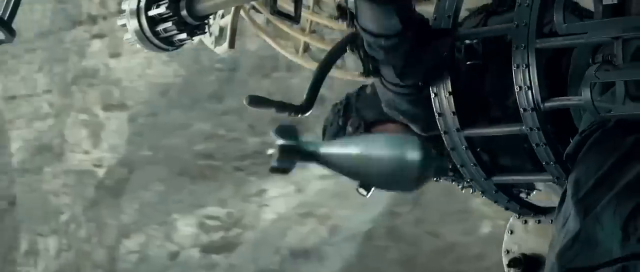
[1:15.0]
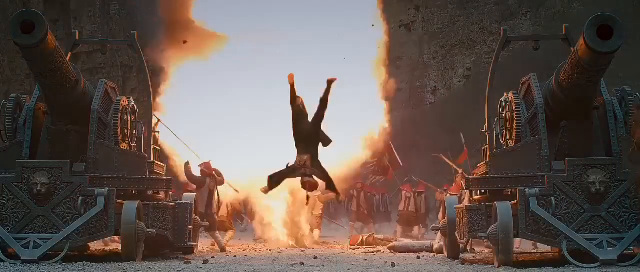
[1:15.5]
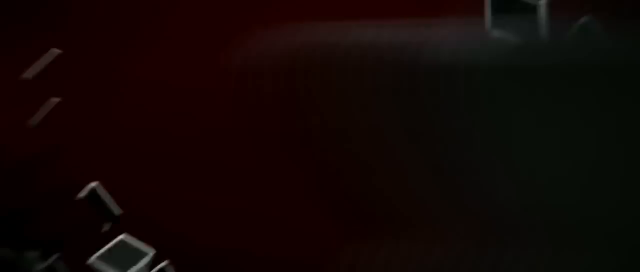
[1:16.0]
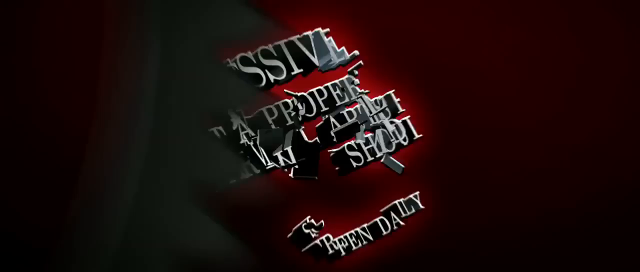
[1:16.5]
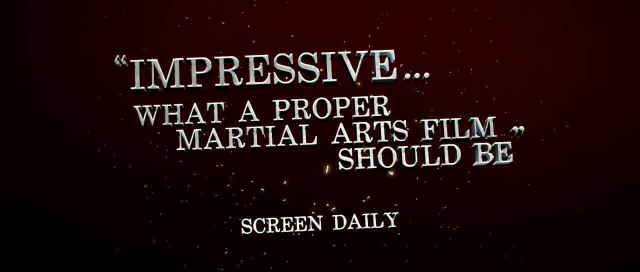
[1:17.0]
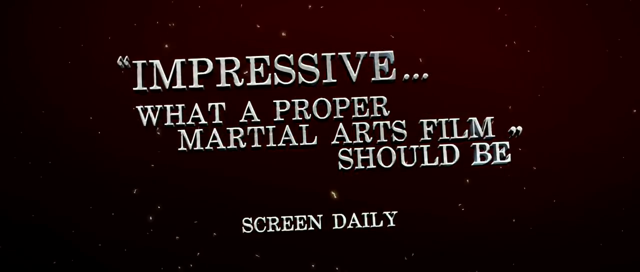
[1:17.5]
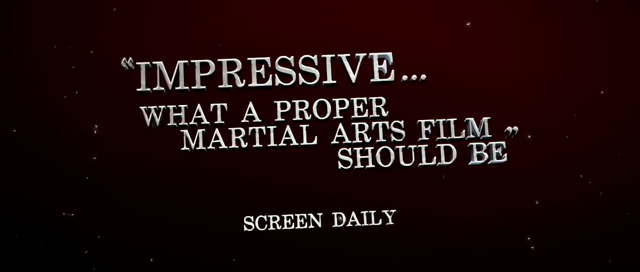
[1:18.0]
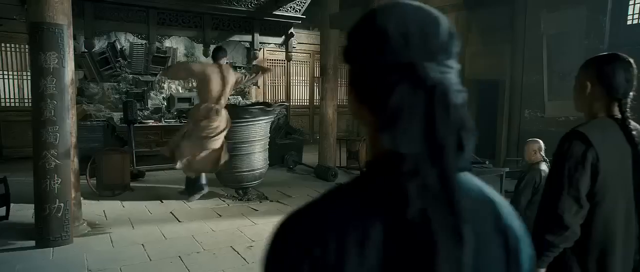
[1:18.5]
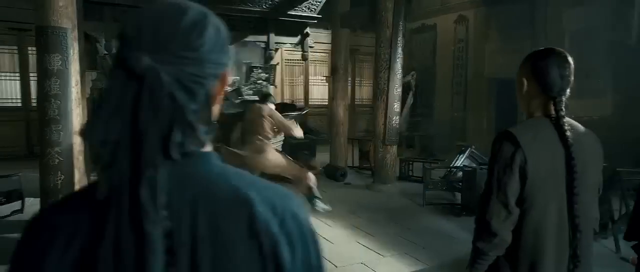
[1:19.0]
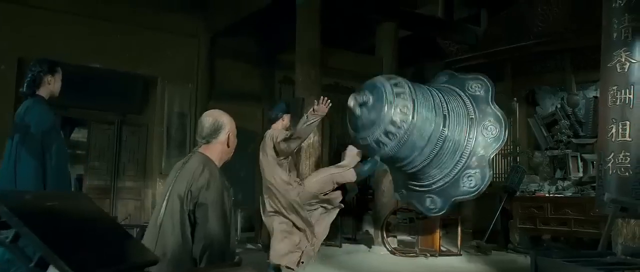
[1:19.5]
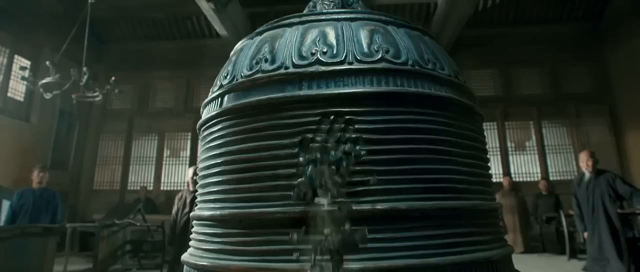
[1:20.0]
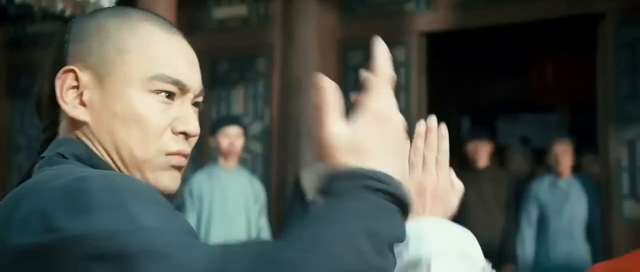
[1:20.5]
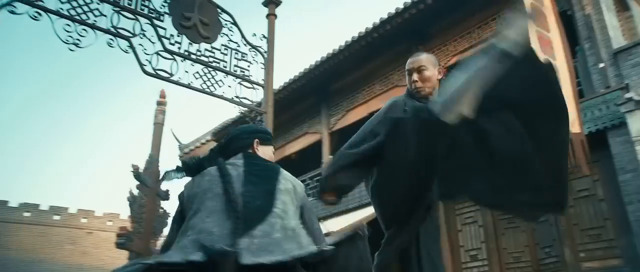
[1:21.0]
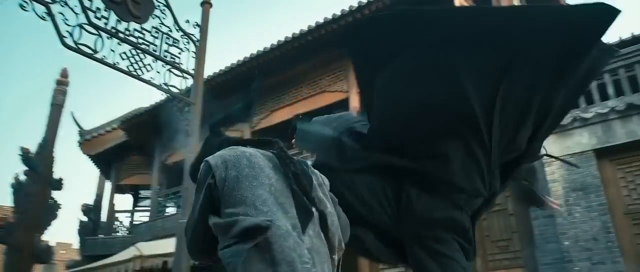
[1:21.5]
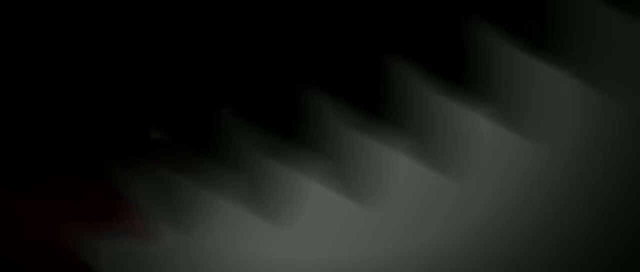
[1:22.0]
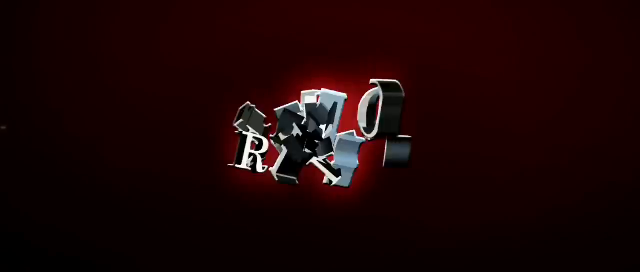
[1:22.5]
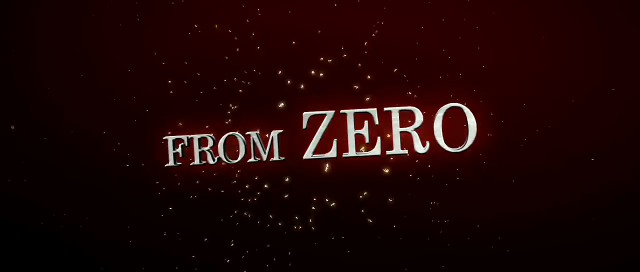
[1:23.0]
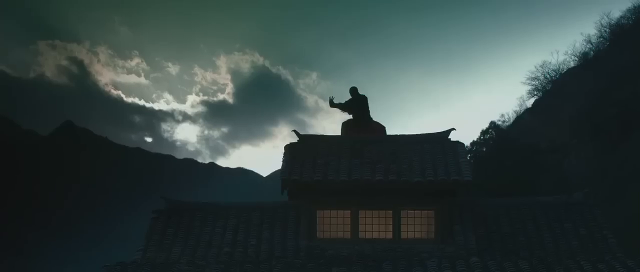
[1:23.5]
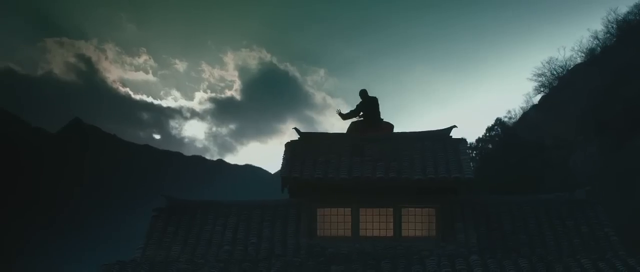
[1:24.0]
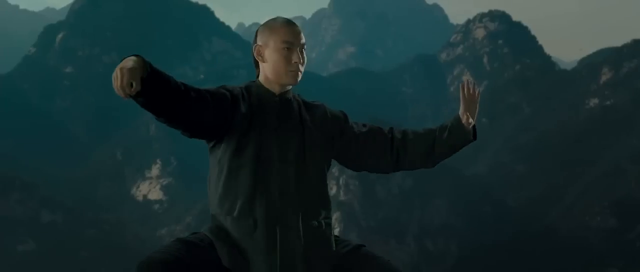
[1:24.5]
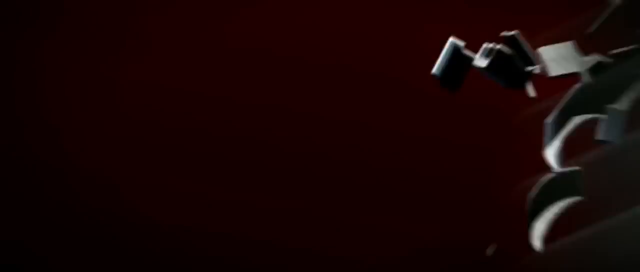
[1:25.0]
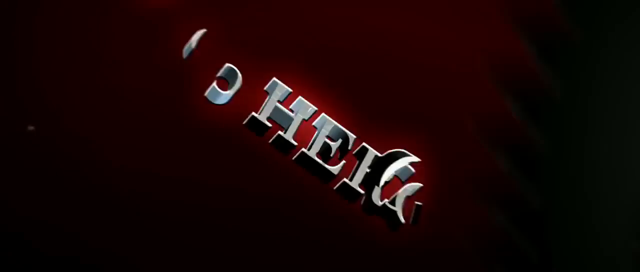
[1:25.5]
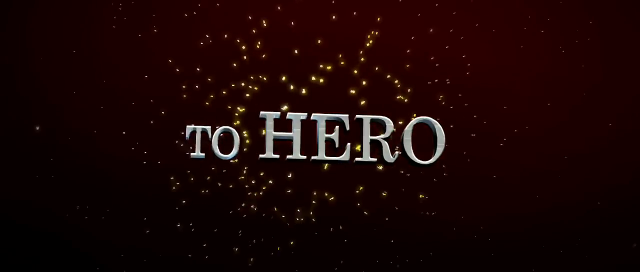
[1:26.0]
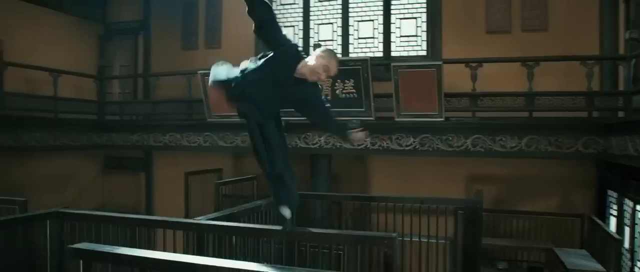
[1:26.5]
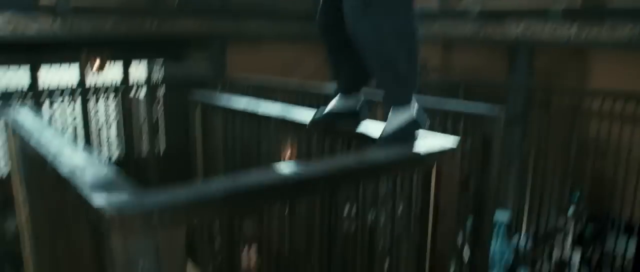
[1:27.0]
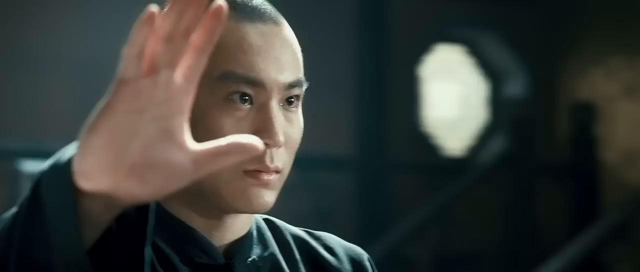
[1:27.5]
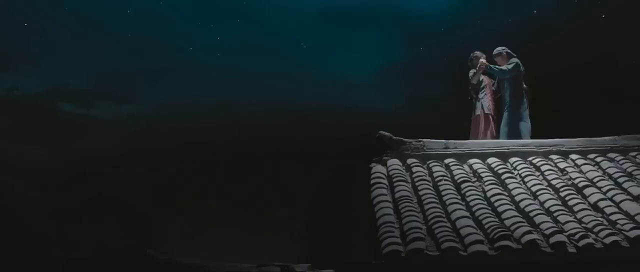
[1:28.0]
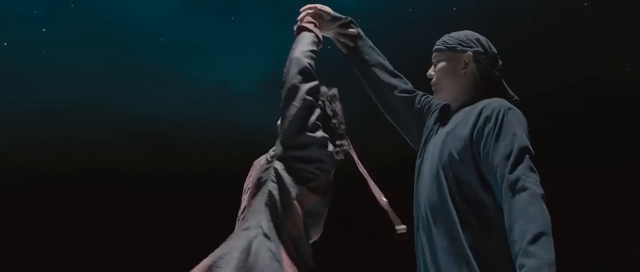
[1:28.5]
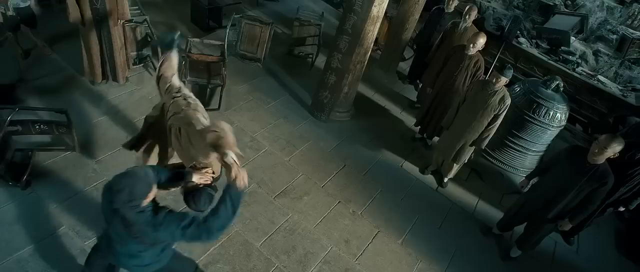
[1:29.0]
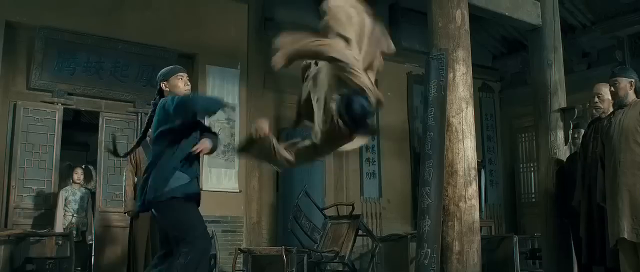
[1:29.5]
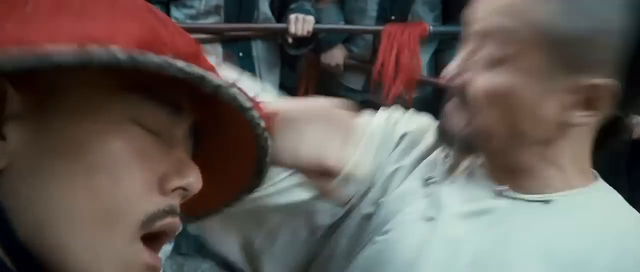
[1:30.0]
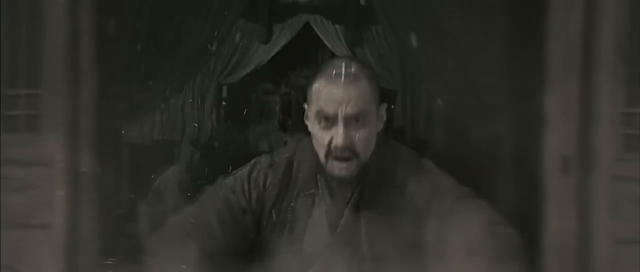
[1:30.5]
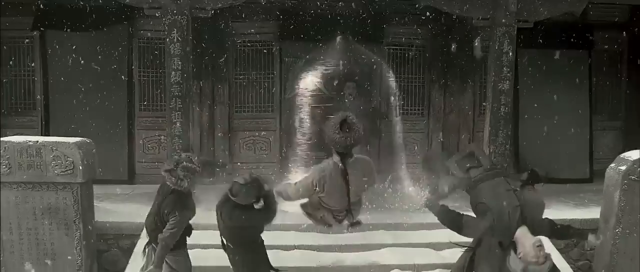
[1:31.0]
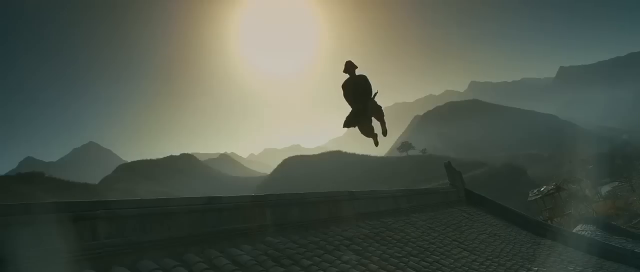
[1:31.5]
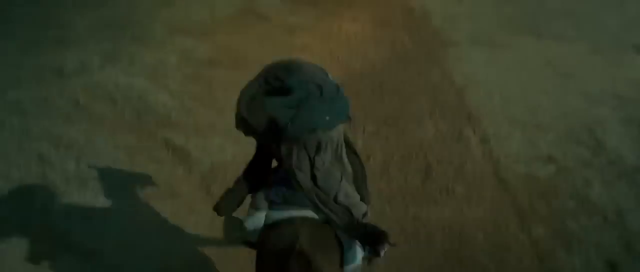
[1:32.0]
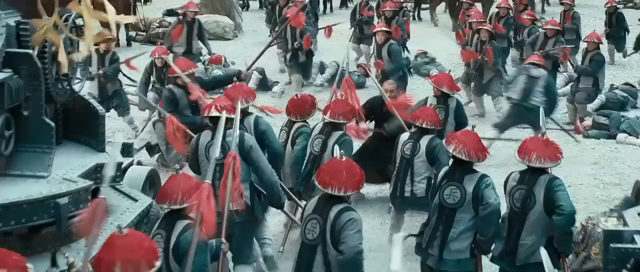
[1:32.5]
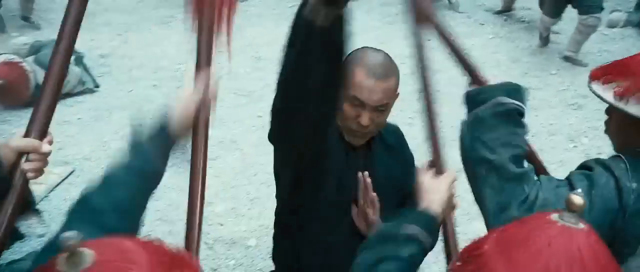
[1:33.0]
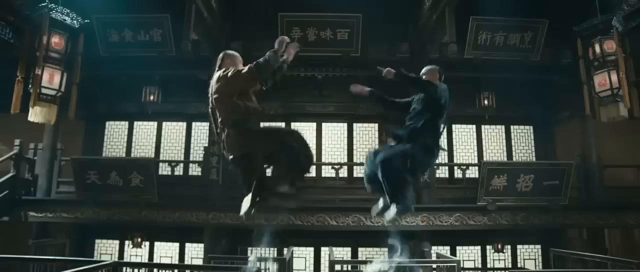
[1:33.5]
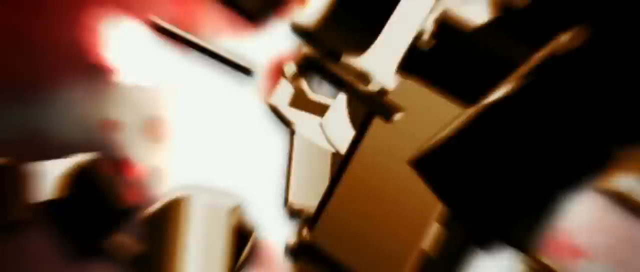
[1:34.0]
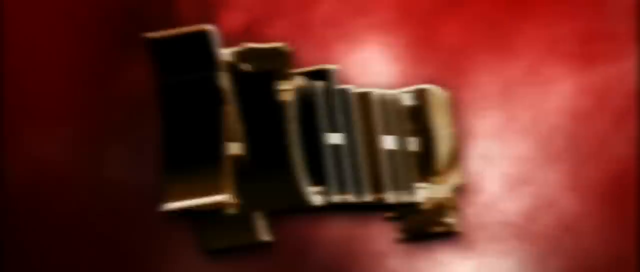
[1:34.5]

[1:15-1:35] An image indicates that the film is impressive and is what a martial arts film should be, and more text indicates that the protagonist goes from zero to hero. There are many fight scenes on a battlefield, and after an explosion a man is shown spinning around in the air. A woman trains with a man, and men fight on what appears to be a staircase. A man kicks a very large bell, and what appears to be a man jumps on a rooftop. The hero performs Tai Chi training on a rooftop and engages in hand-to-hand combat with several opponents. The woman with him is very likely his love interest and is training him for the battle. A man rides a horse away from the front of the screen, off into the background.